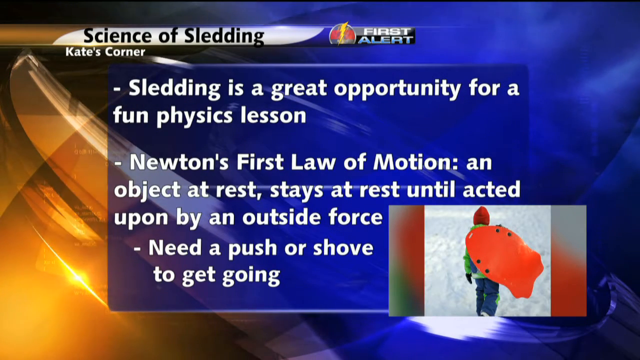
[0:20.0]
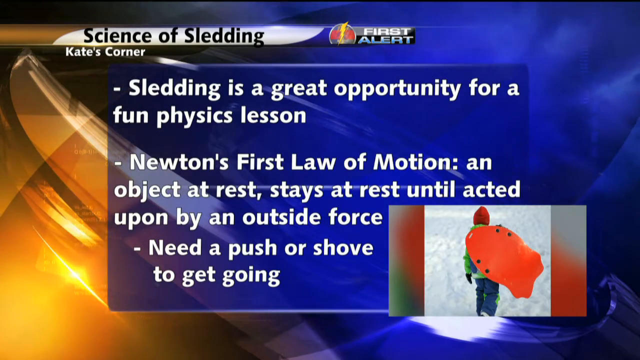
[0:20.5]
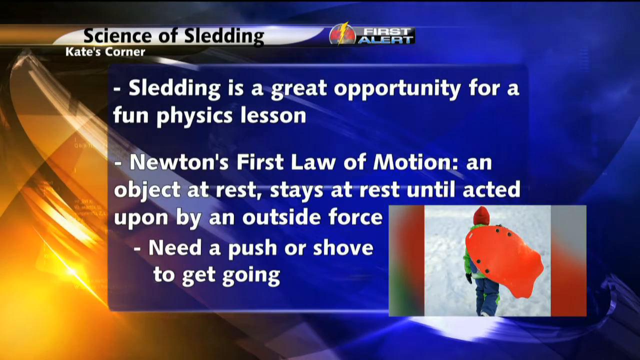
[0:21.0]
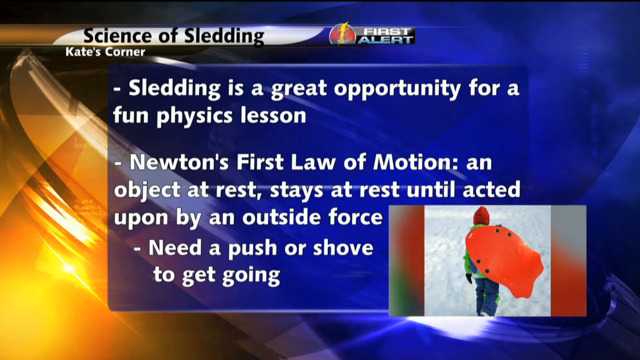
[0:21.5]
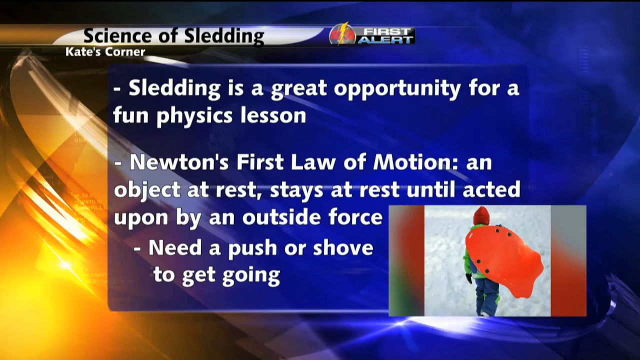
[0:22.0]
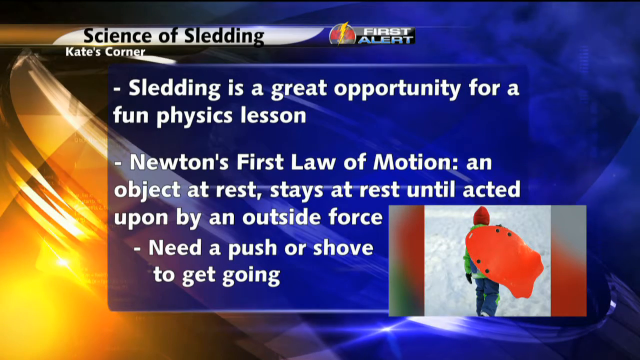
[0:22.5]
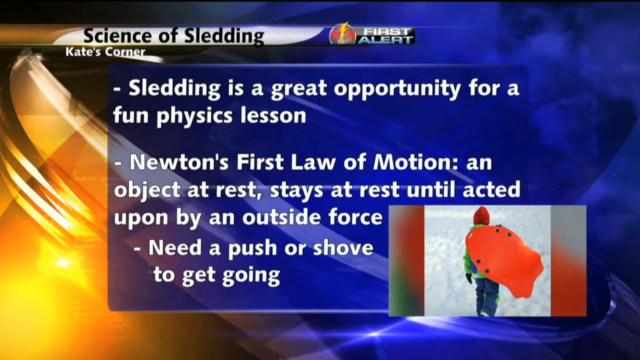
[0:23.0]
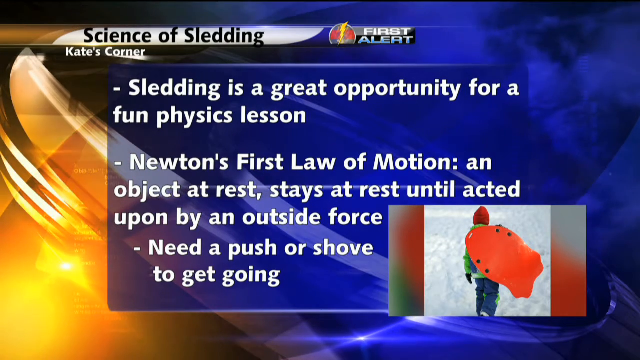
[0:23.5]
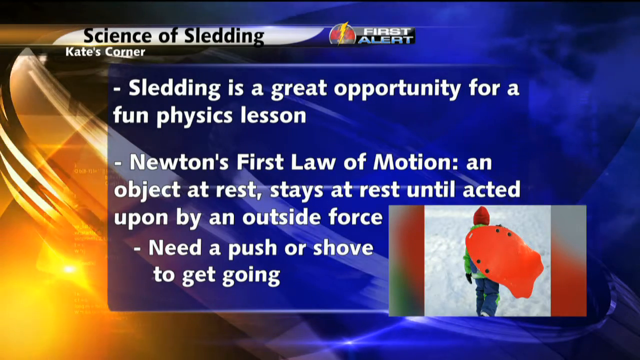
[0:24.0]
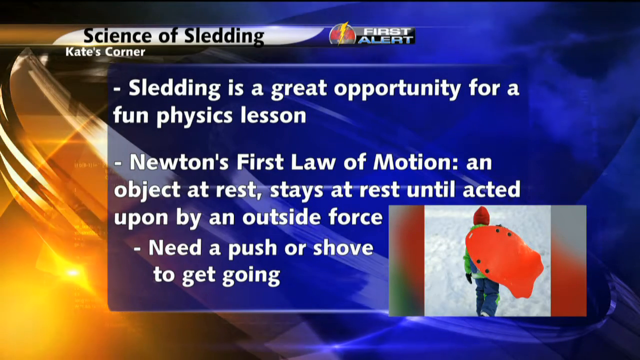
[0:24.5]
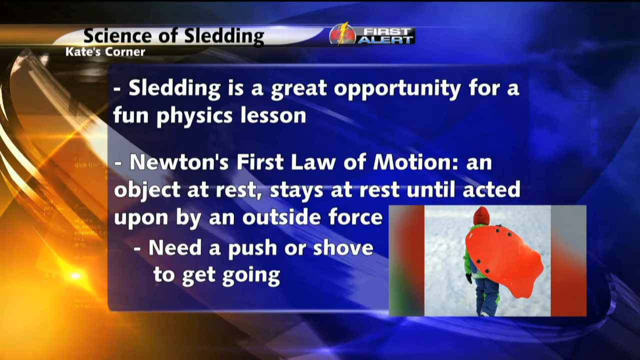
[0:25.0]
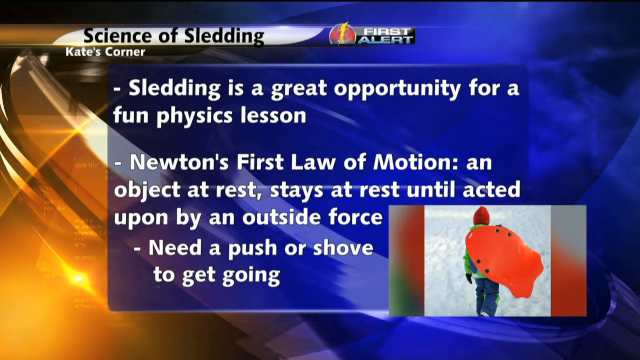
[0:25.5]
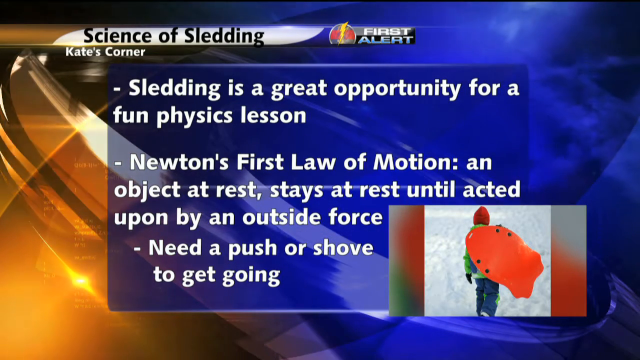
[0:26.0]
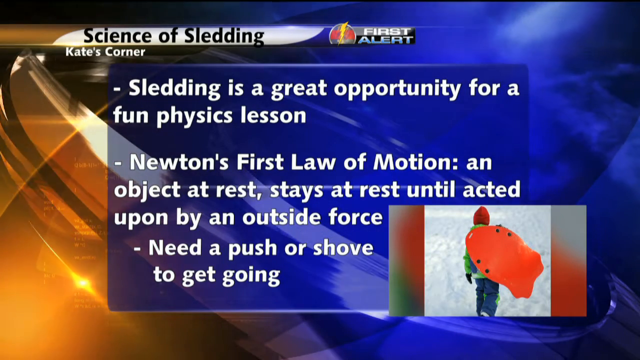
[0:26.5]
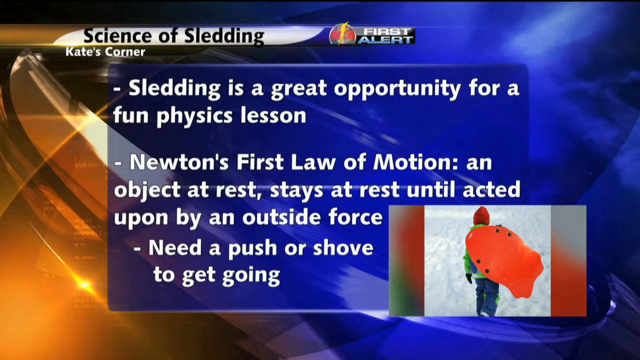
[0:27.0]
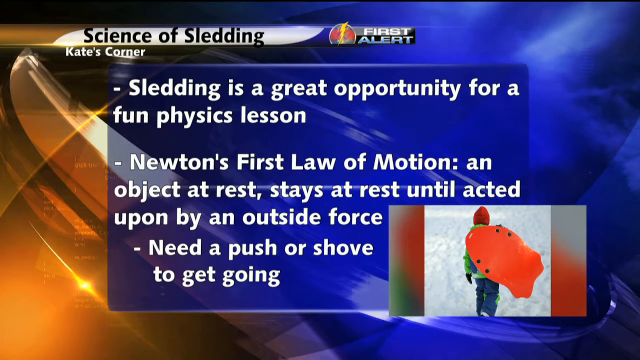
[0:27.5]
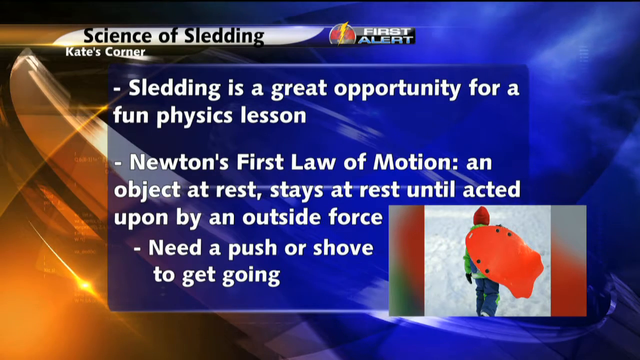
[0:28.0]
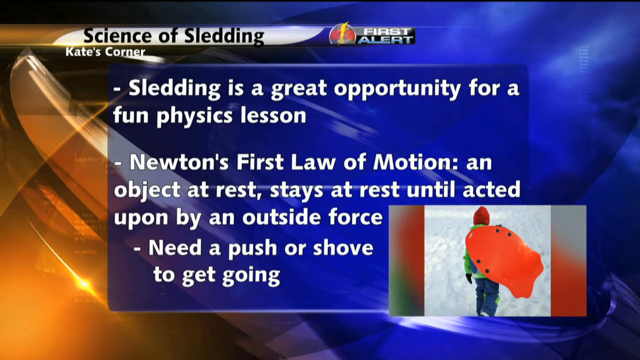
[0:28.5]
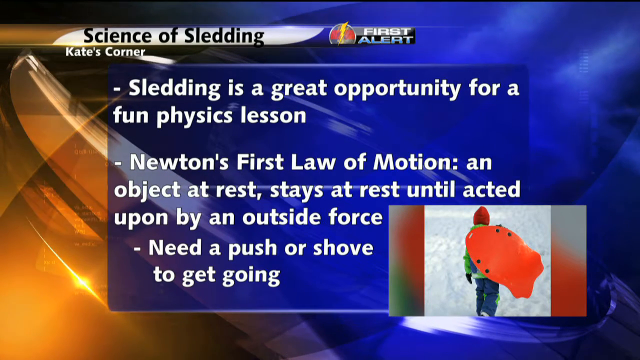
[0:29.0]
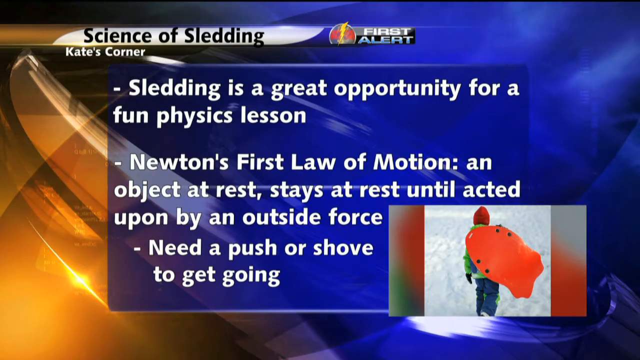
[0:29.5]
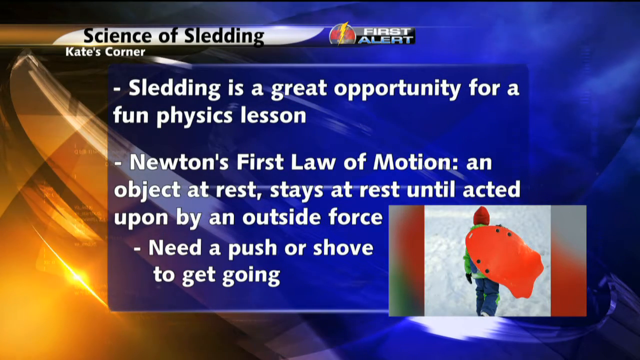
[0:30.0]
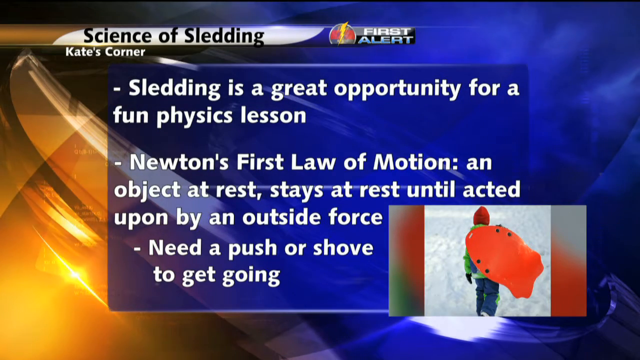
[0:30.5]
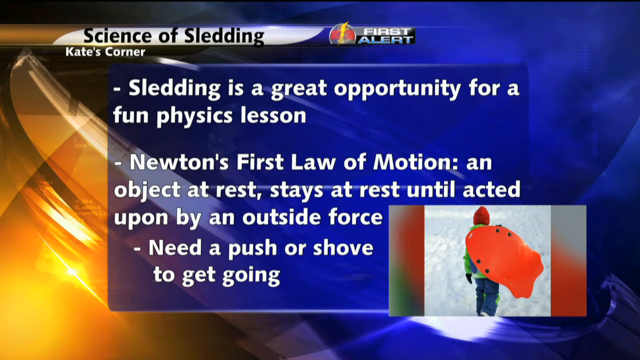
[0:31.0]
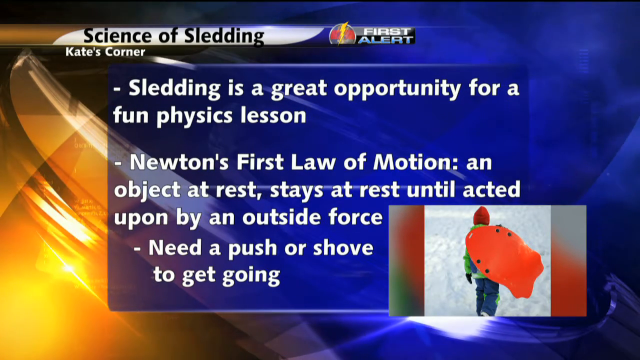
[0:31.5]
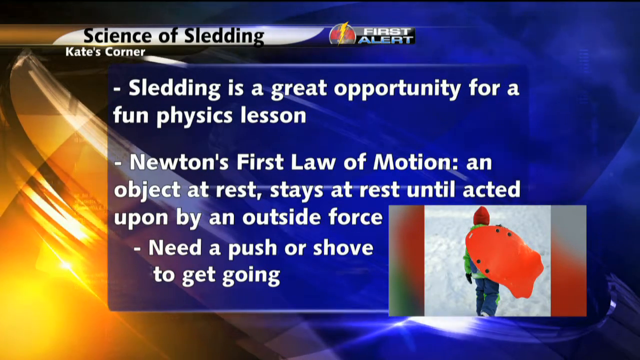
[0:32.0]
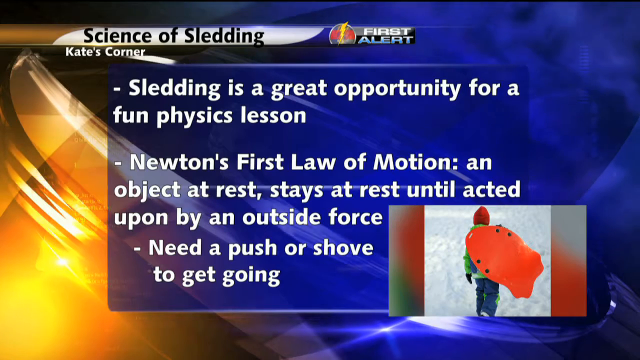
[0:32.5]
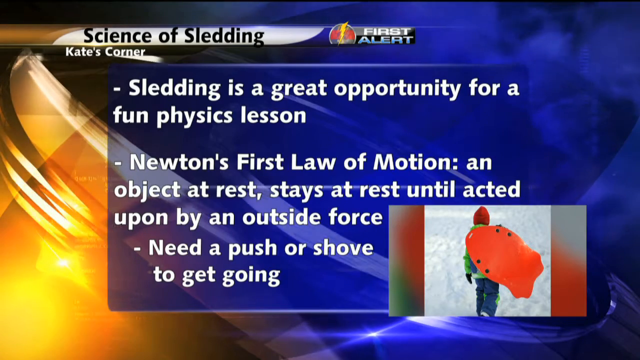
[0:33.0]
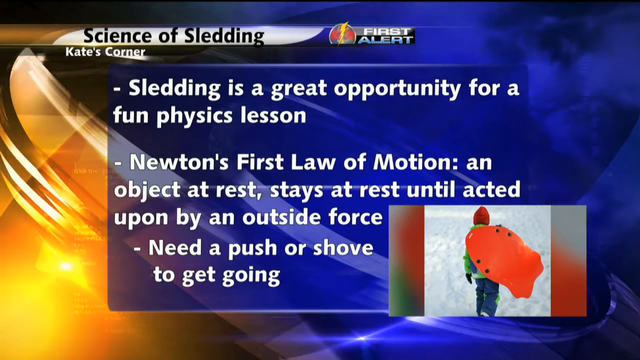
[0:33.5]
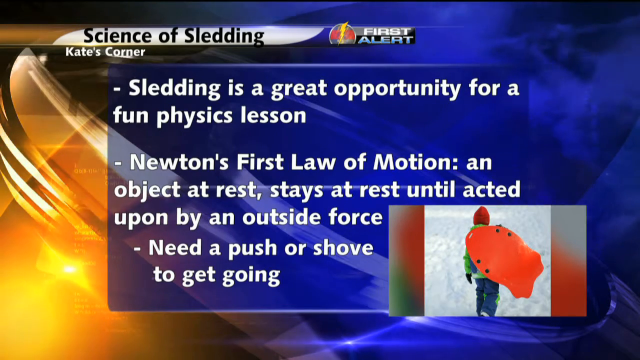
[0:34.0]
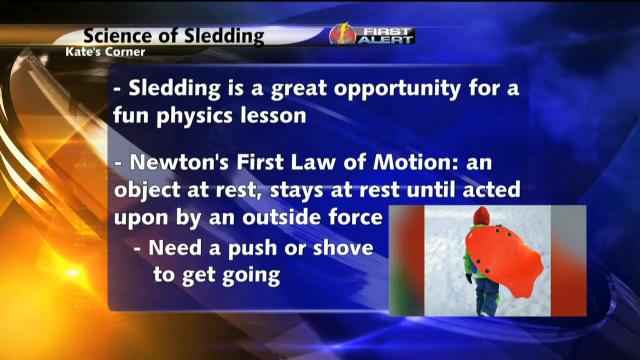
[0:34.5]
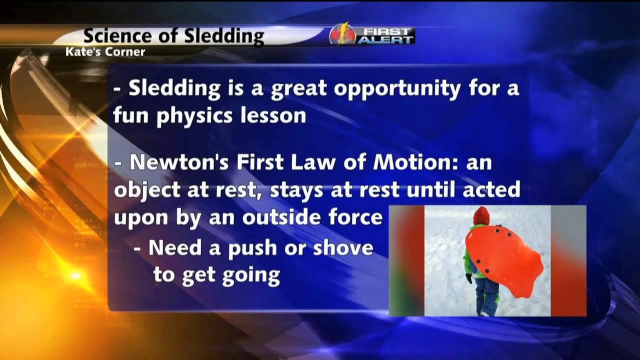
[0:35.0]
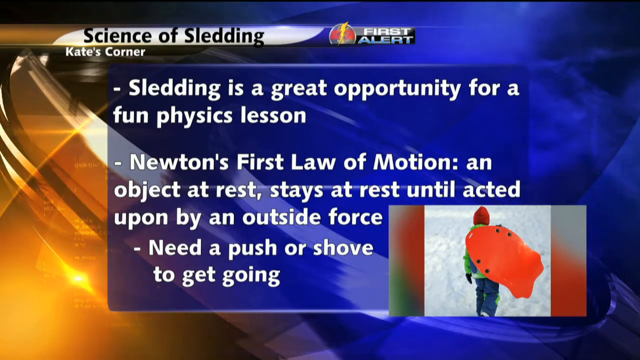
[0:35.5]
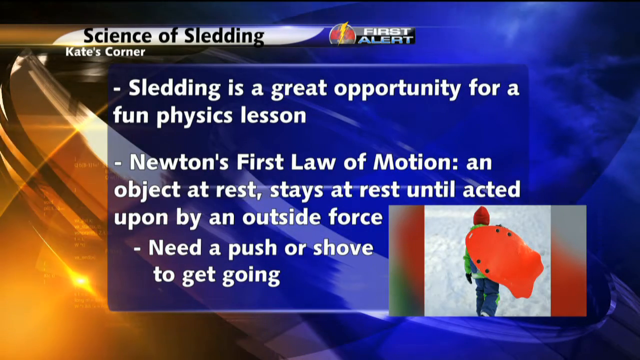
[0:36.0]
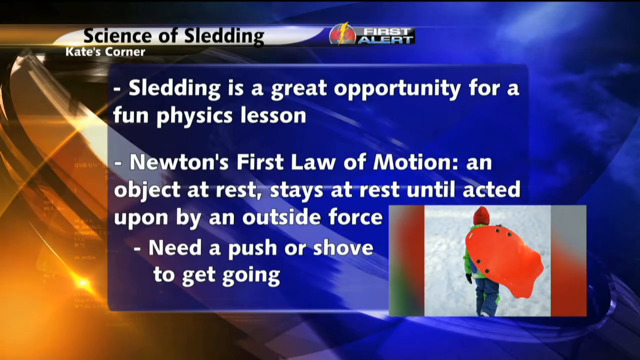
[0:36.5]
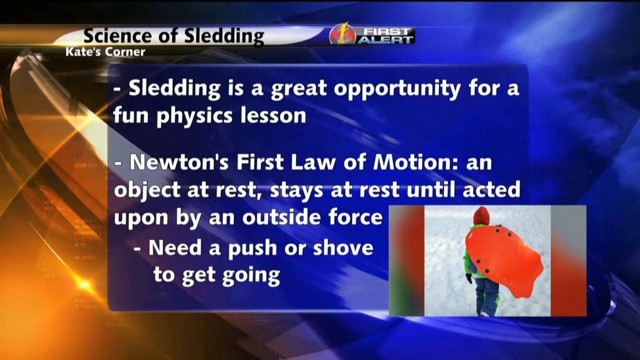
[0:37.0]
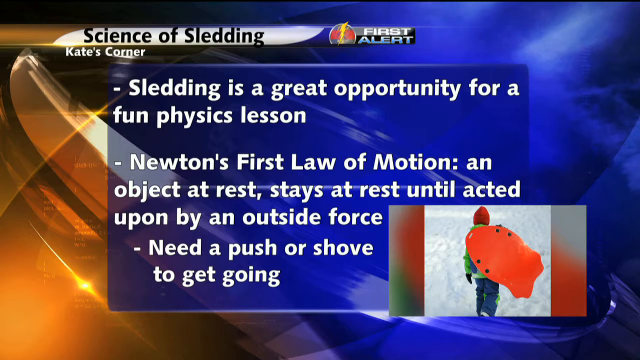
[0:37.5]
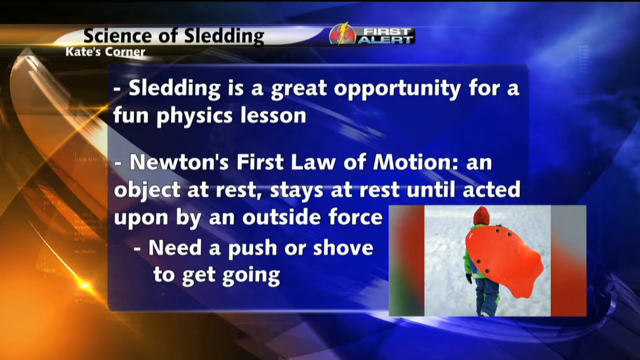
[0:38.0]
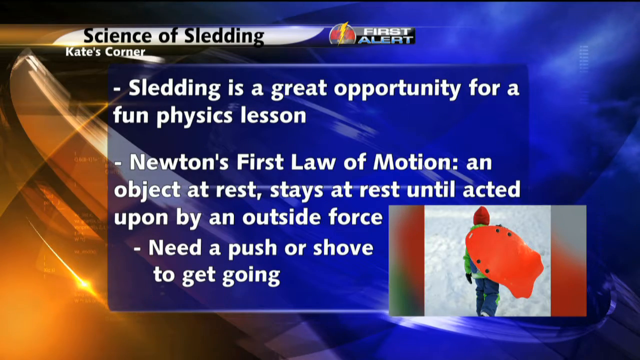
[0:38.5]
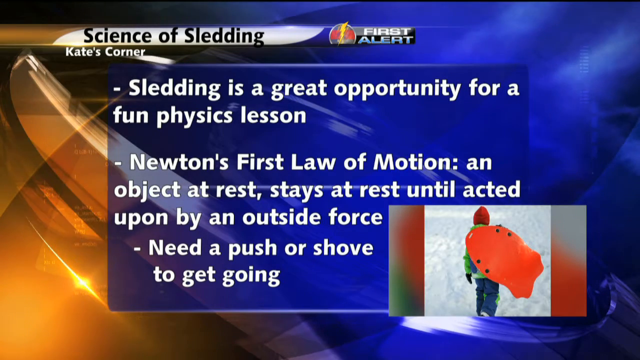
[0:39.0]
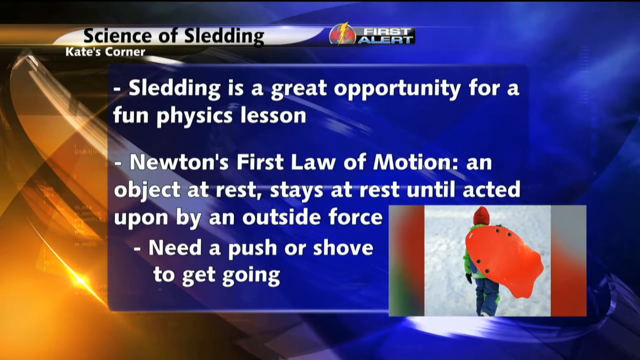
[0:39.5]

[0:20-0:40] The screen shows a news segment. At the top left is the text "Science of Sledding," with the first alert logo of the news station to the right of it, and below that is "Kate's Corner." A card in the middle of the screen reads: "Sledding is a great opportunity for a fun physics lesson. Newton's first law of motion, an object at rest stays at rest until acted upon by an outside force. Need a push or shove to get going." In the lower right corner is an image of a young person carrying an orange sled on their back as they walk up a hill of snow, with snow all around them. A black glove is visible on their hand. Their snowsuit is lime green on top and dark blue on the bottom and looks like insulated clothing designed for the cold. They also wear a red beanie cap.